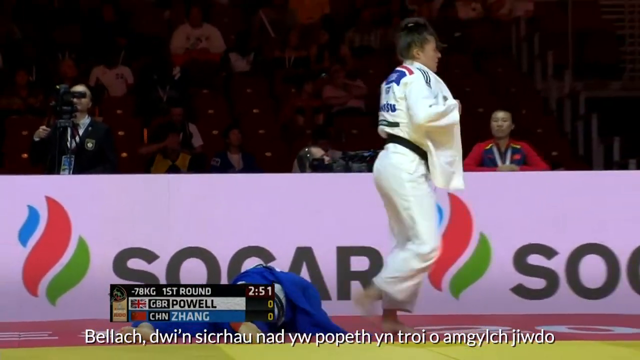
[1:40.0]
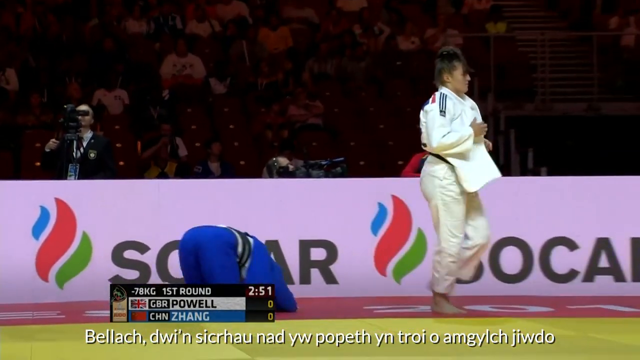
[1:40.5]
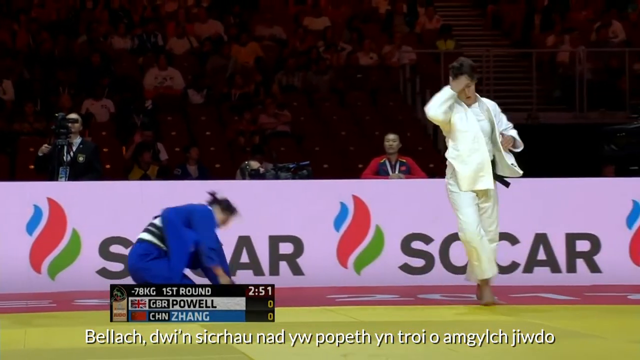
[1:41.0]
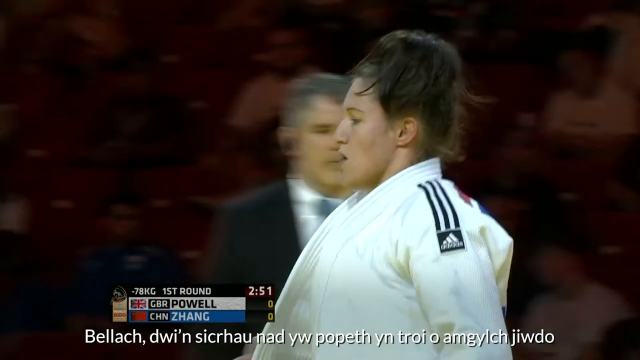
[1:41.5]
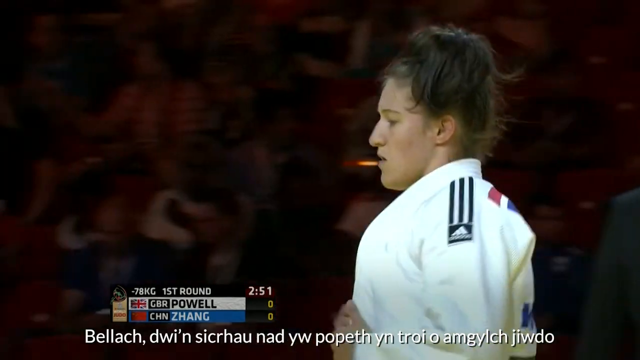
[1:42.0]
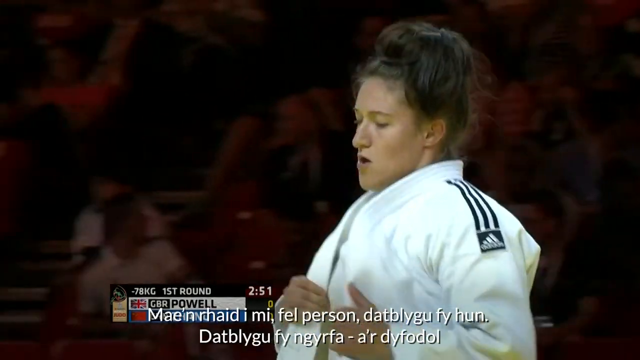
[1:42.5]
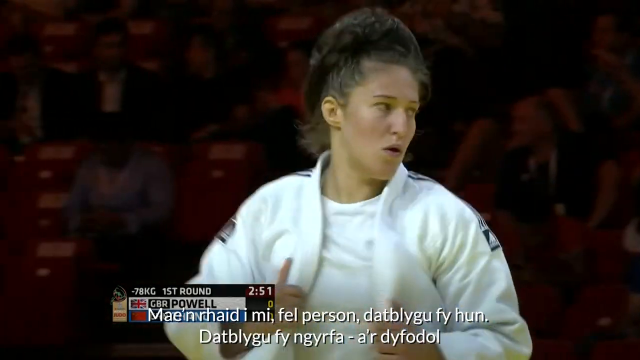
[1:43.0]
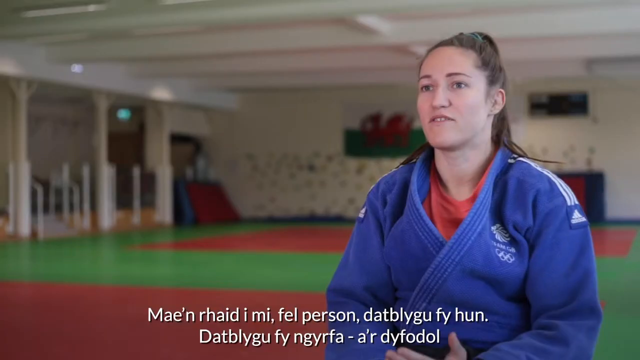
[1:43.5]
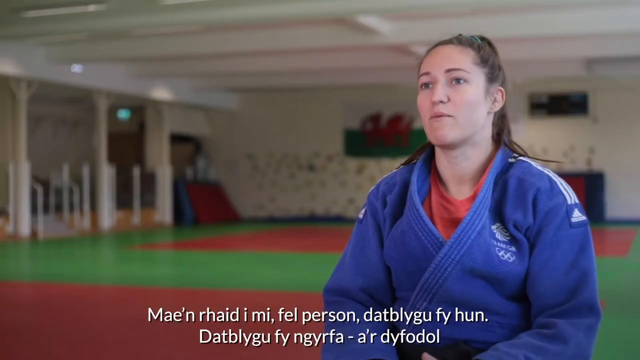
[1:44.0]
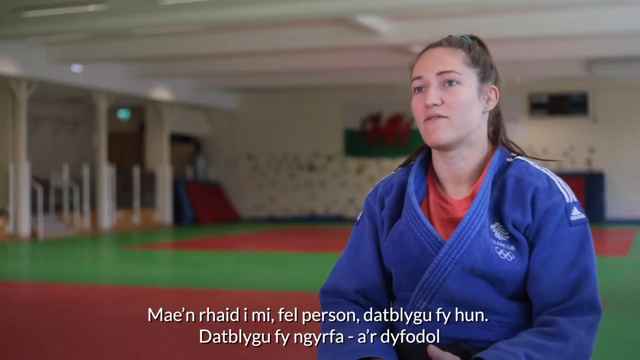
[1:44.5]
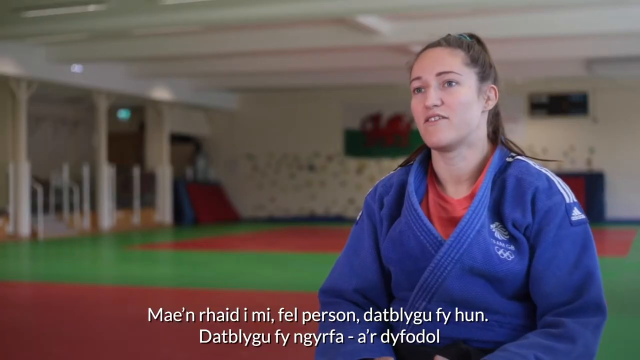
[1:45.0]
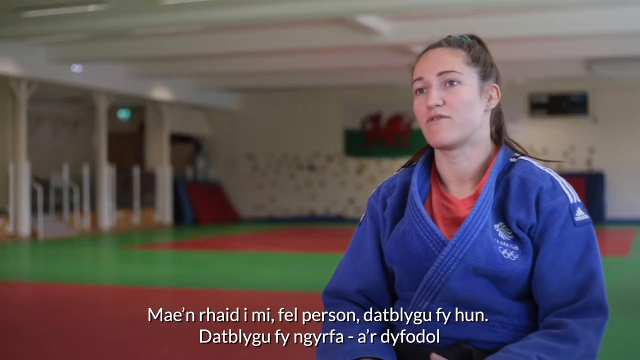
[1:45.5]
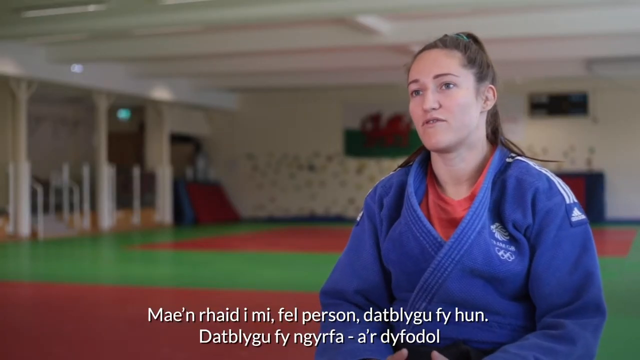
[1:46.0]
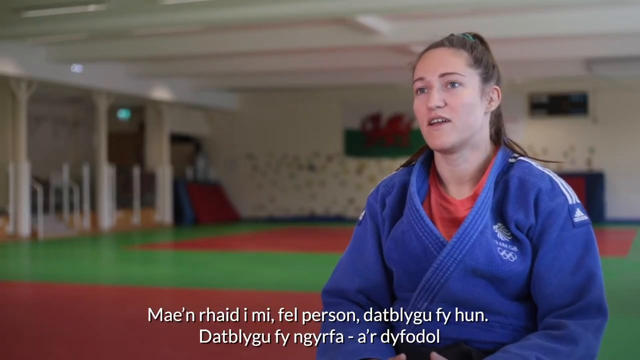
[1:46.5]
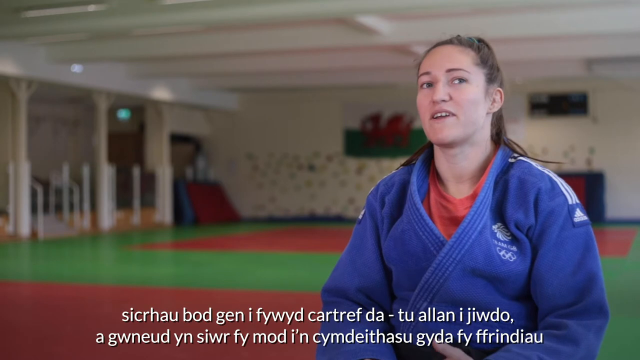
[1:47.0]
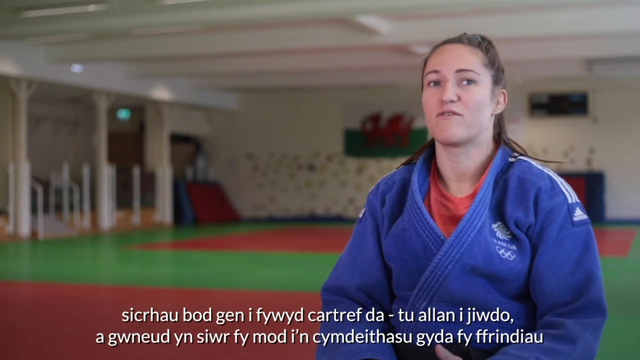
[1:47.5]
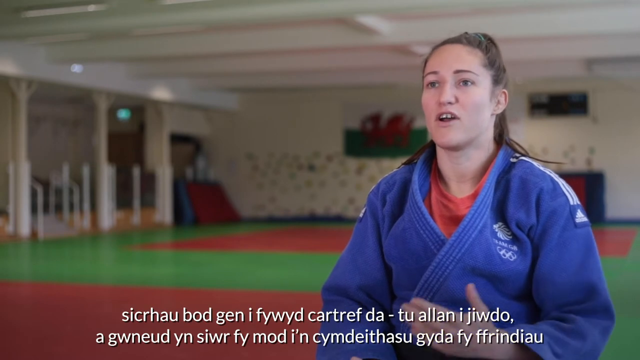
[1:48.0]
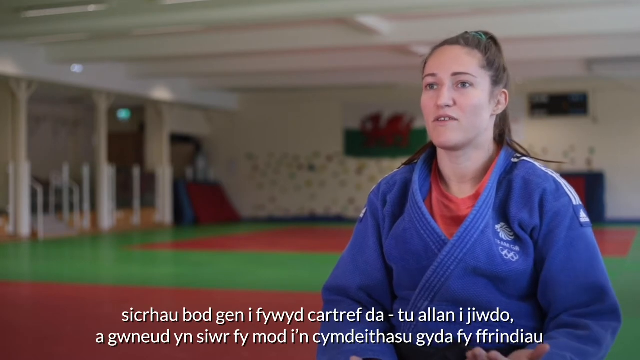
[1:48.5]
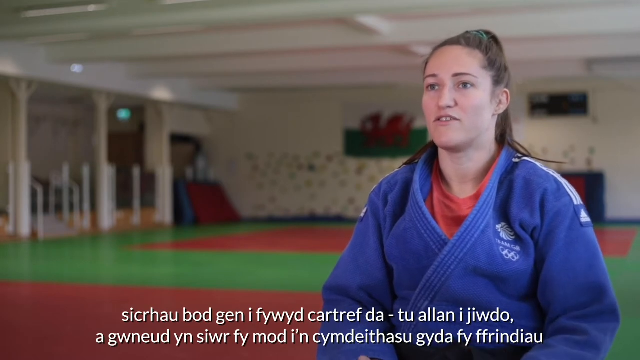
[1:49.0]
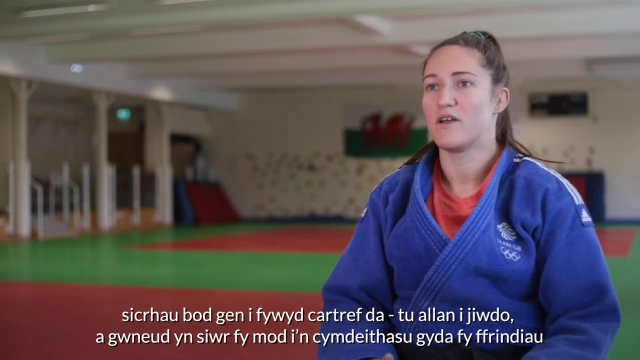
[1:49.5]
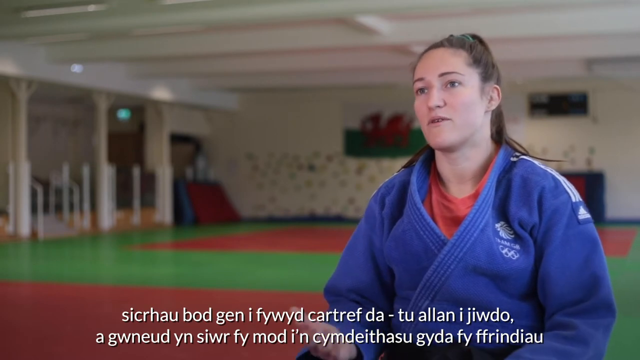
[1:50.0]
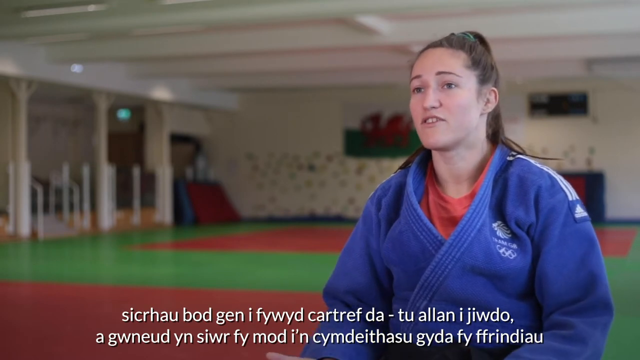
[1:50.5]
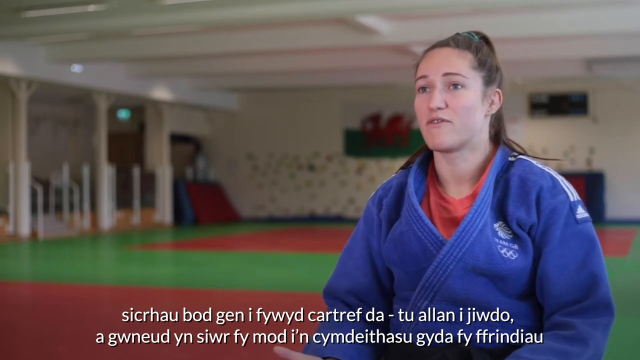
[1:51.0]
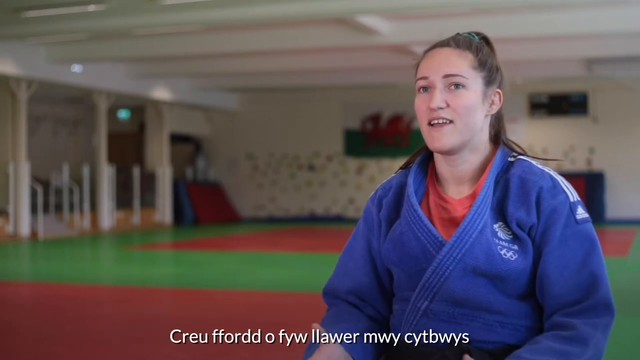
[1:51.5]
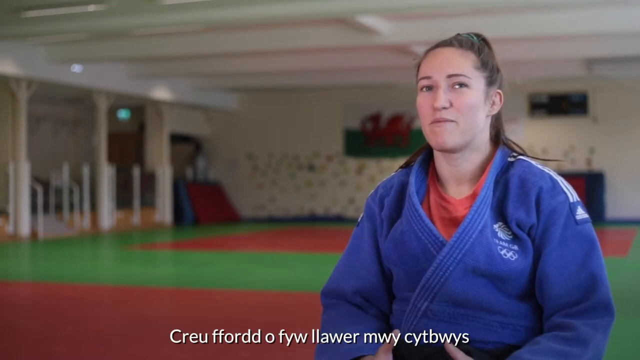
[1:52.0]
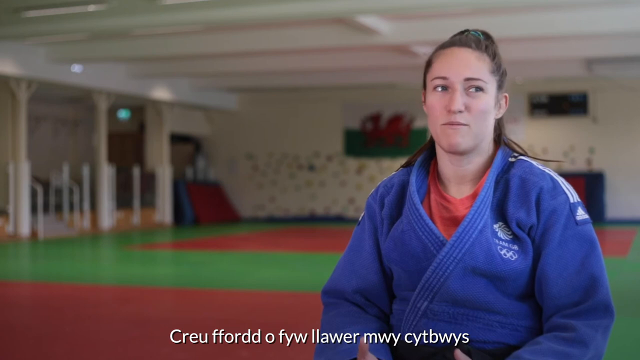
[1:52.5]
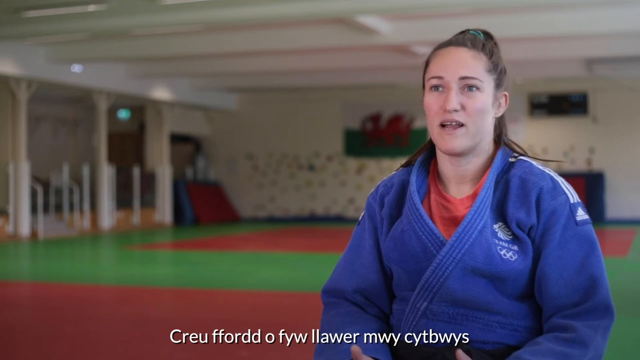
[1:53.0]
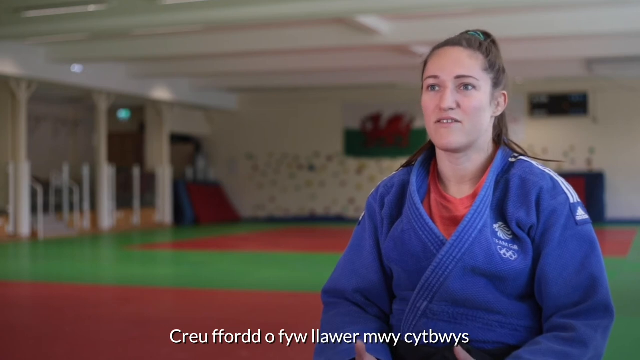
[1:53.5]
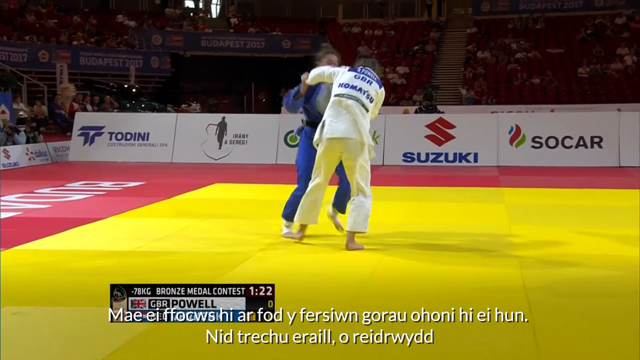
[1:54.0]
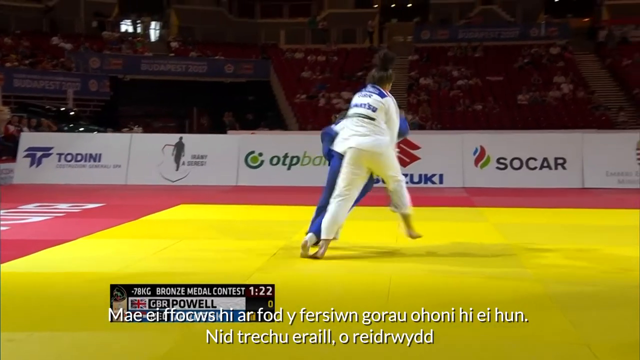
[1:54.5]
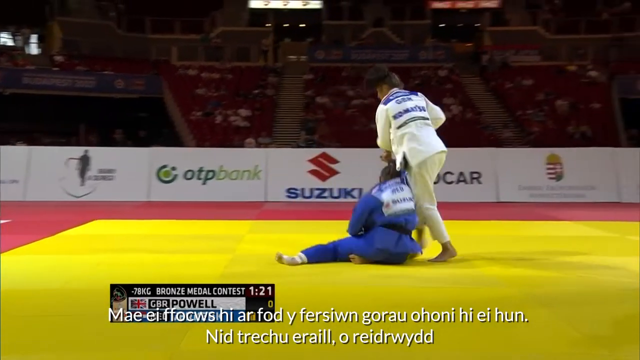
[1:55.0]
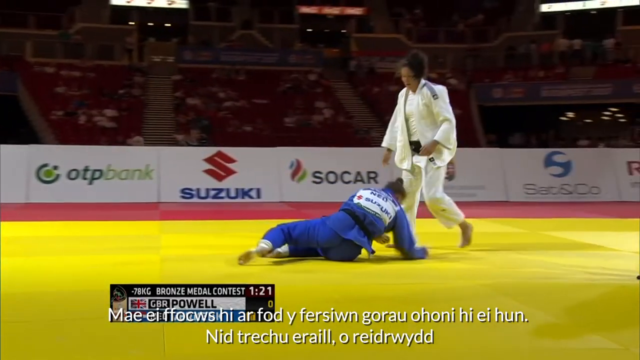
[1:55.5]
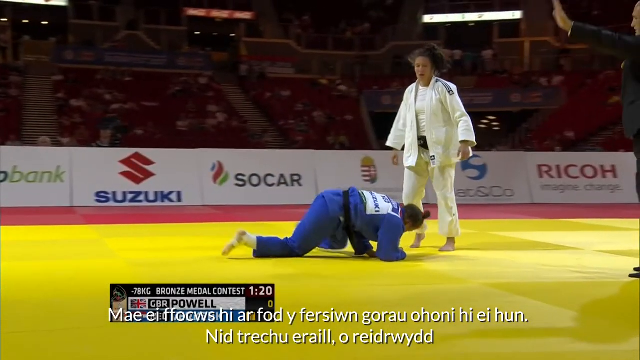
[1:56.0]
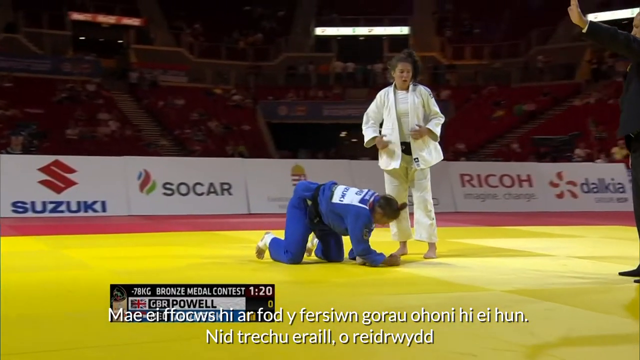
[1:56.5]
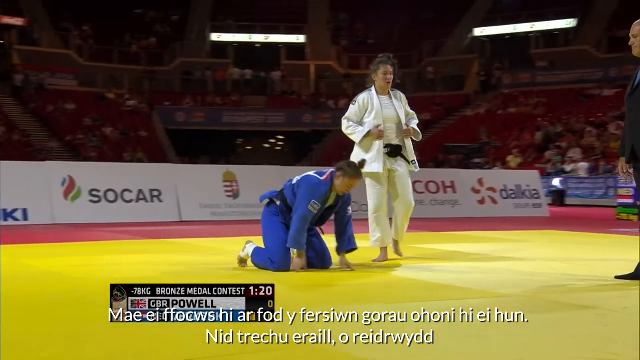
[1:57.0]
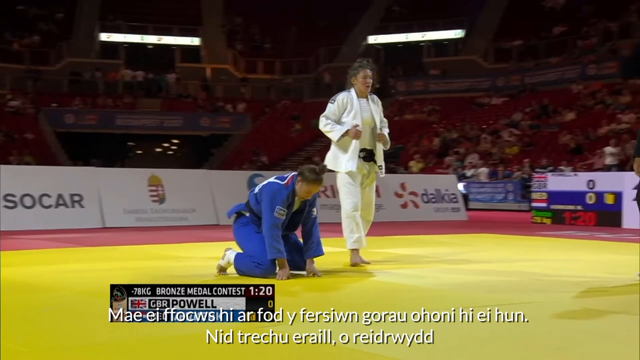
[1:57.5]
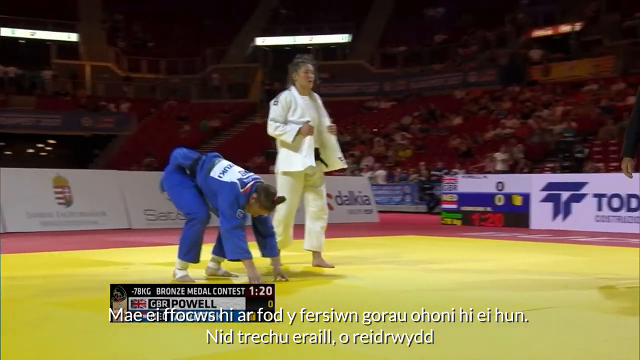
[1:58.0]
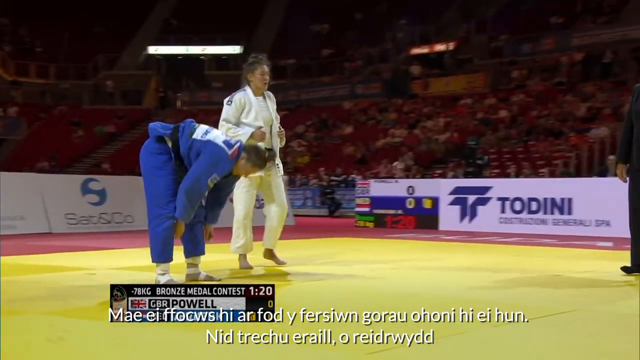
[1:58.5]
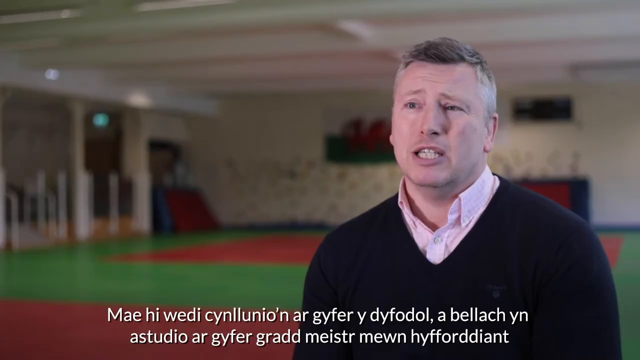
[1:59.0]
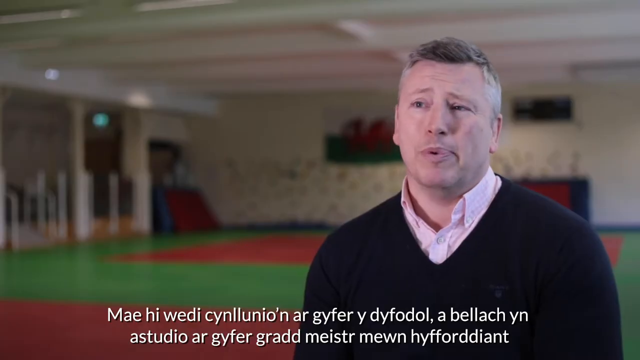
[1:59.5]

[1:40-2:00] Two jujitsu players compete against each other, each trying to gain the upper hand and knock the opponent to the ground to win the match.